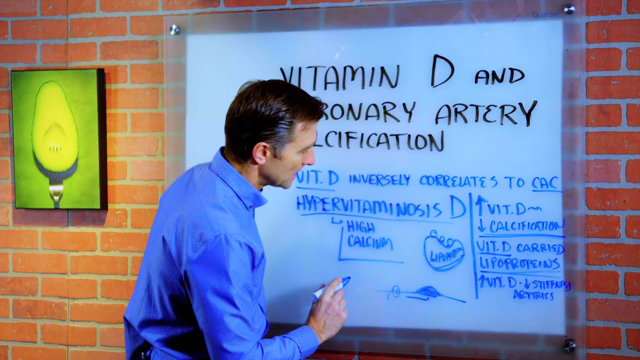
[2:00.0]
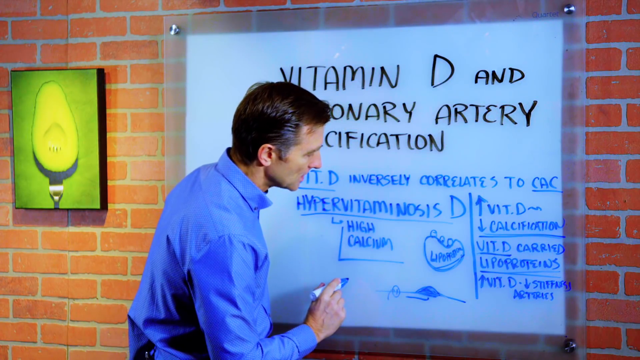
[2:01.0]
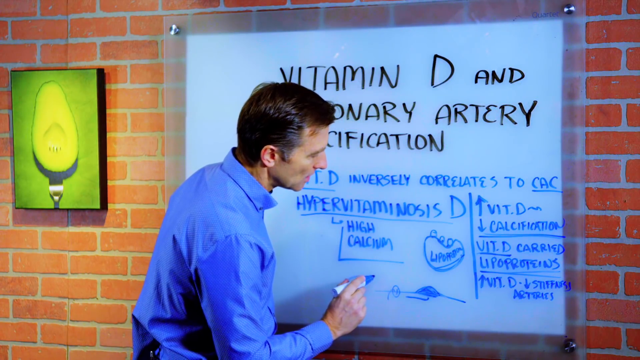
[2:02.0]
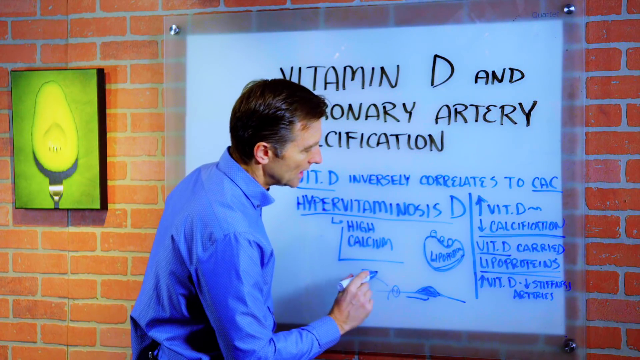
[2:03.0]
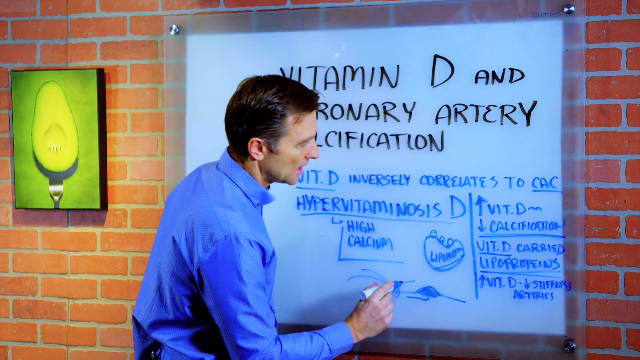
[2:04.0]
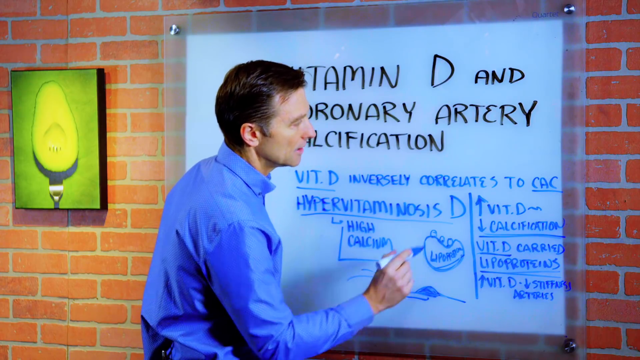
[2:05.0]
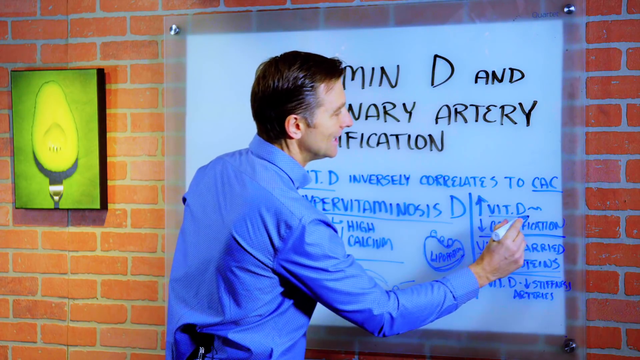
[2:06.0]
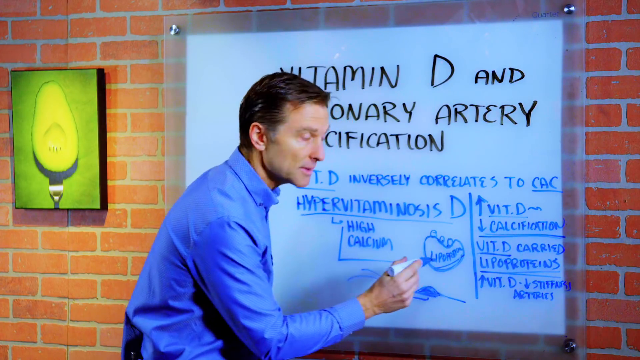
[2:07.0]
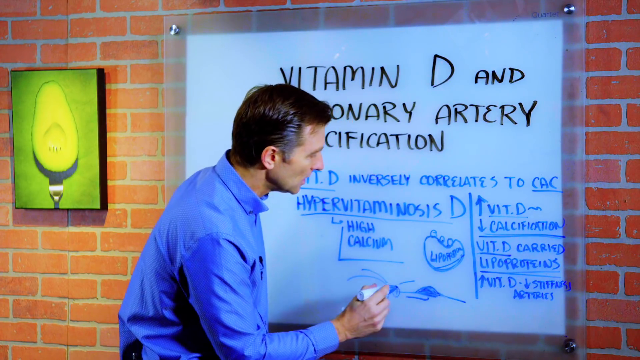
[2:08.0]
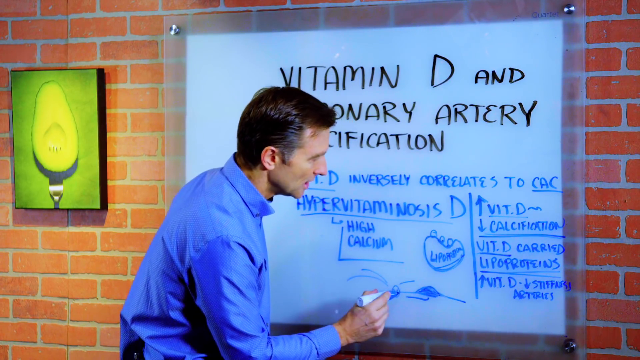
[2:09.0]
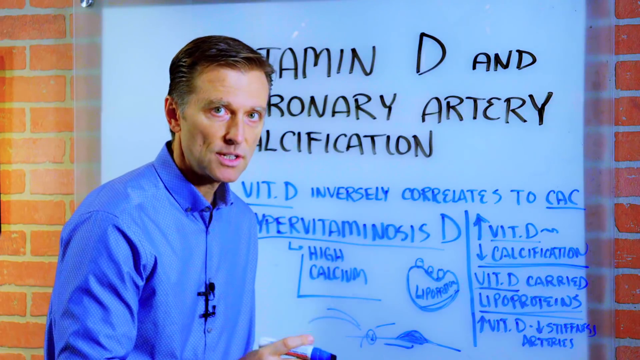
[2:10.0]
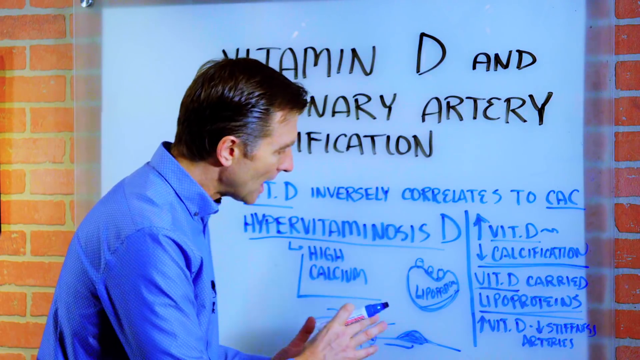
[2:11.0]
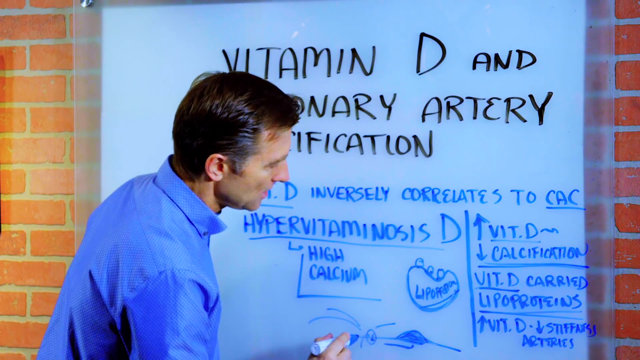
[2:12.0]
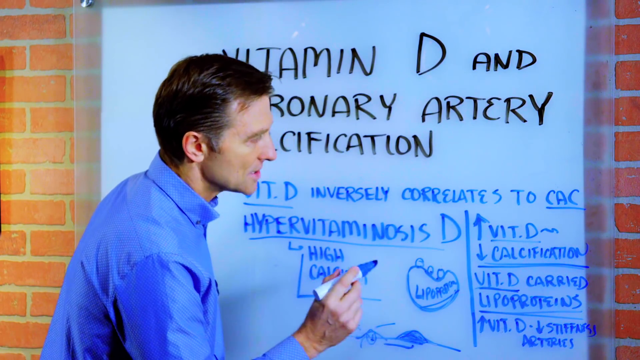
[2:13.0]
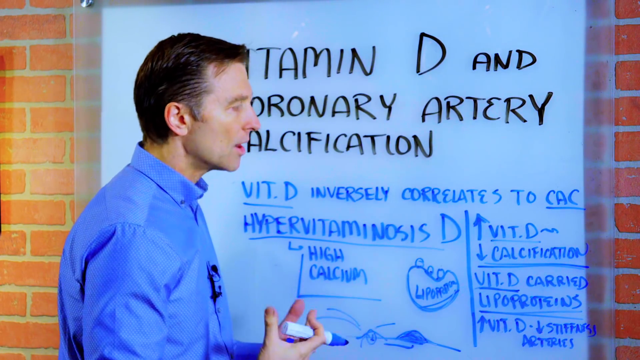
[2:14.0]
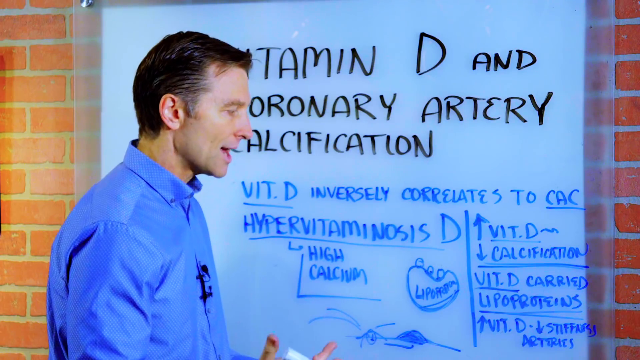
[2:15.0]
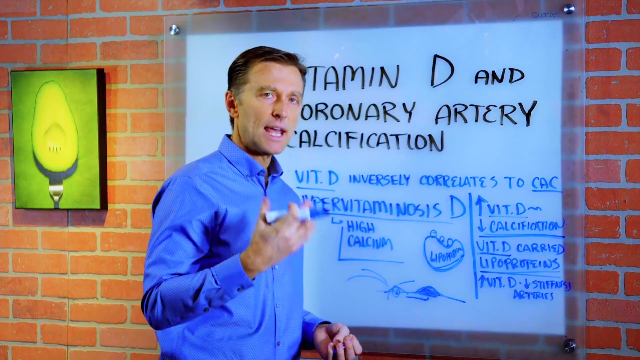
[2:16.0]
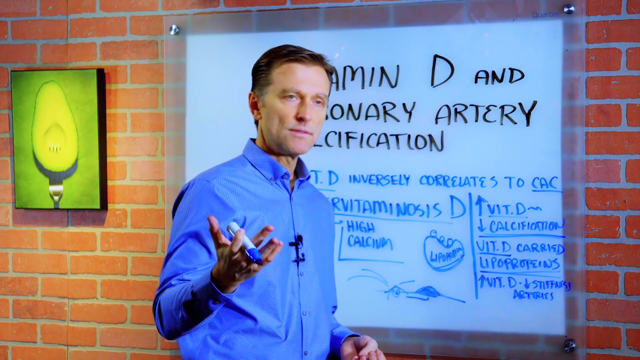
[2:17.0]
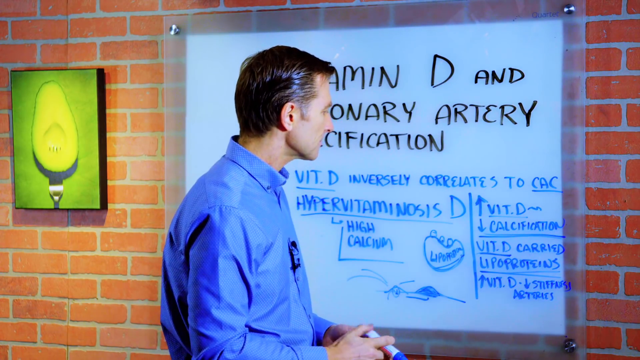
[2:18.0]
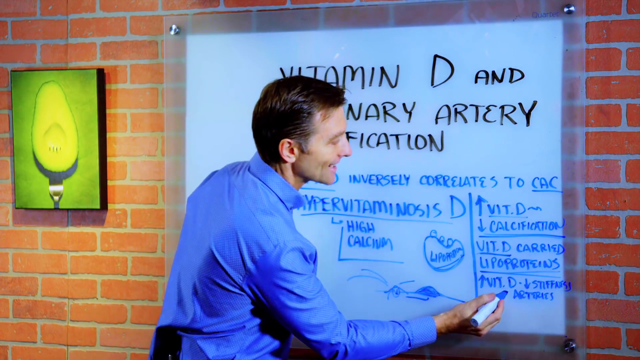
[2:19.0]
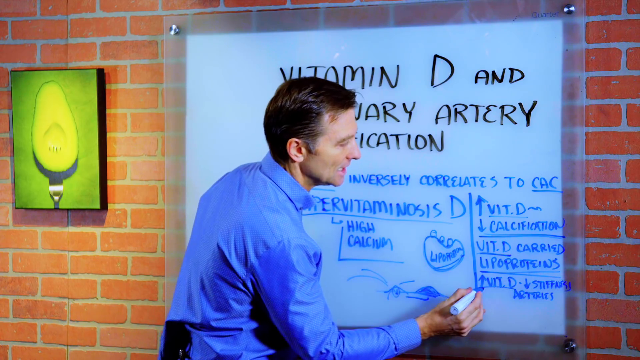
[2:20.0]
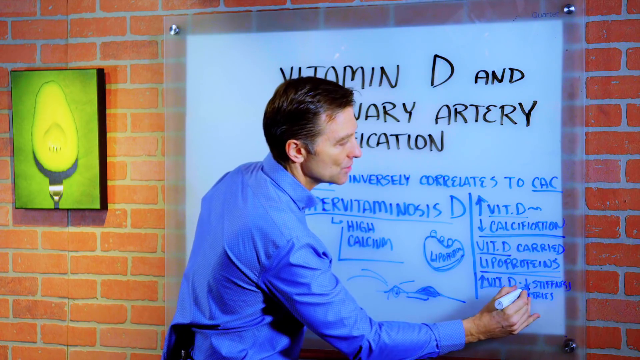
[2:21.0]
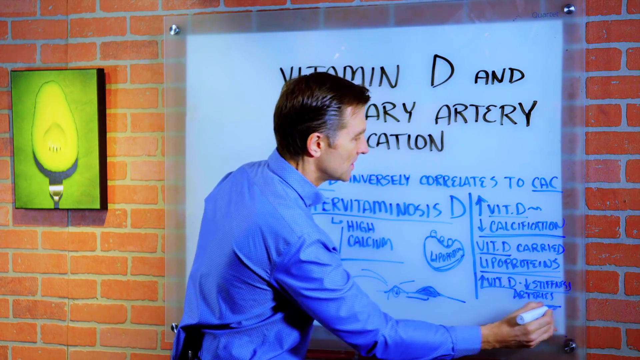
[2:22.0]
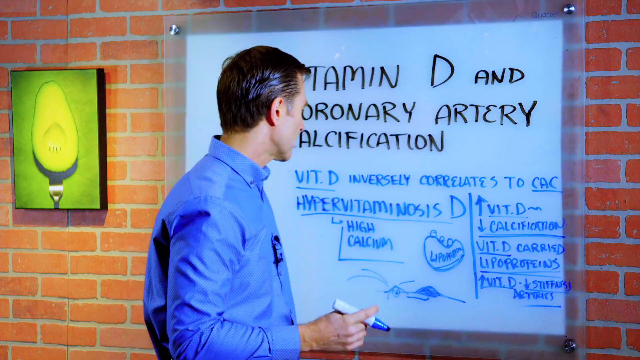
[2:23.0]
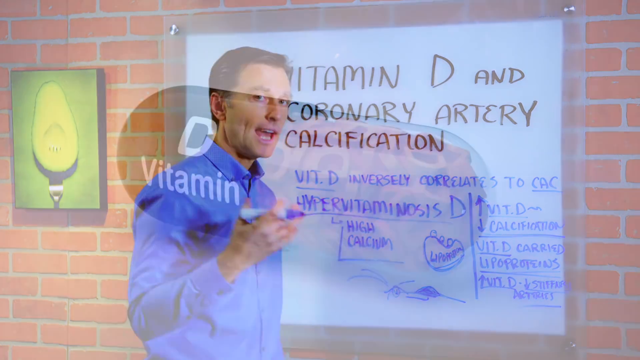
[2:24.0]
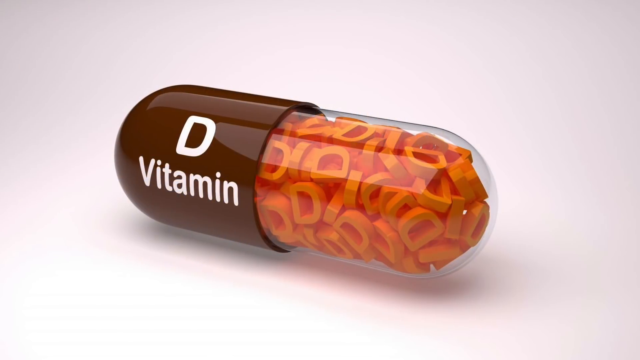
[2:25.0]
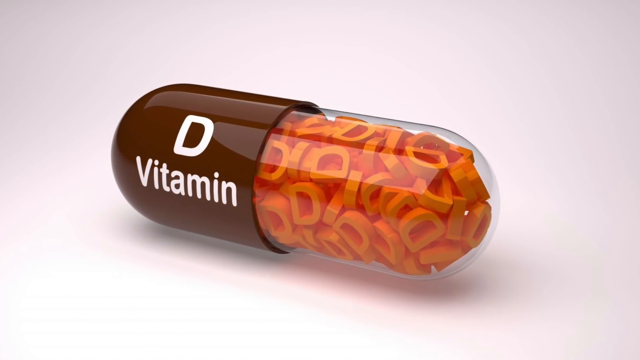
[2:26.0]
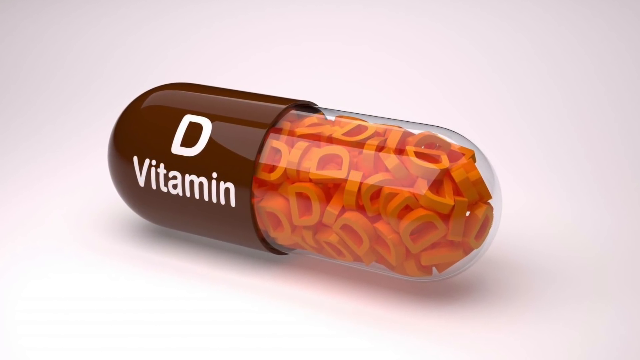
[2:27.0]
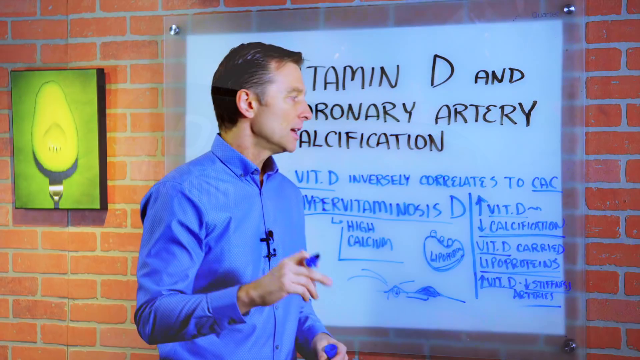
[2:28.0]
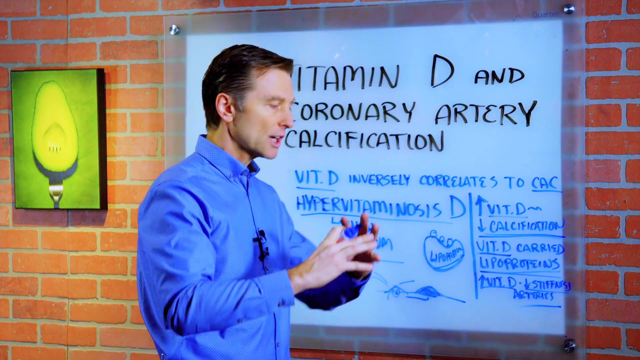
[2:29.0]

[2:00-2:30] The man is tilted slightly forward, his elbows mostly at 90 degrees, holding the marker with his index finger on top and his thumb curled around the bottom. The marker has a white body, with a little blue knob sticking out at the end to indicate the color, and it is blue at and leading to the tip. Talking, he makes an arc-like motion above "high calcium," with a double curve, then goes over and underlines "vitamin D." He turns and talks as the camera zooms in a little more, and an image shows what looks like volcanic matter spewing out the top. He brings his hands to his chest for a moment while holding the marker, talking and turning. In the far right-hand column toward the bottom of the board, he highlights and underlines "vitamin D" again, as well as the text about stiffness in the arteries. A cross-section of a large vitamin D follows: the left side is solid brown and says "D" with "vitamin" in white underneath, and the right side has a clear body with many letter D's scattered in it.